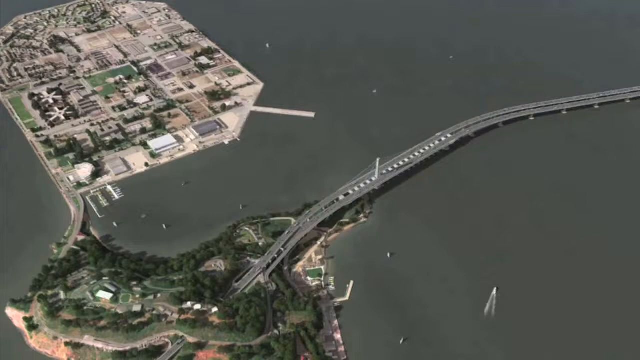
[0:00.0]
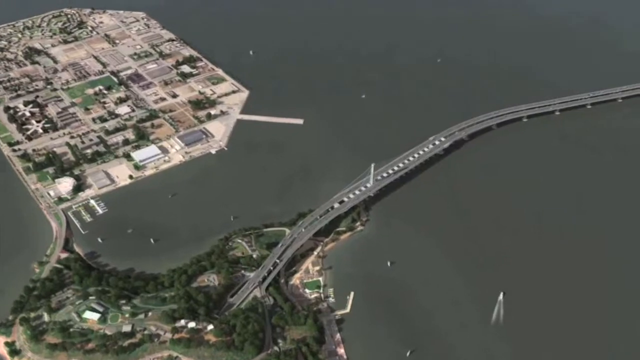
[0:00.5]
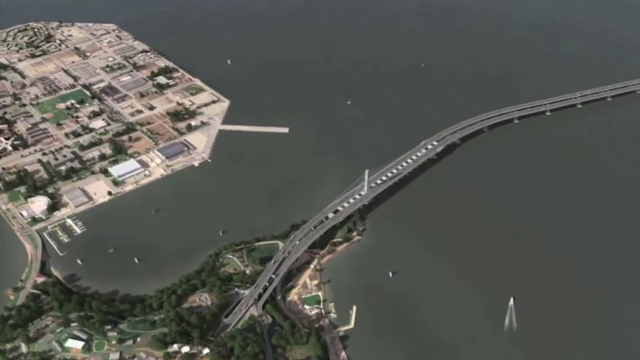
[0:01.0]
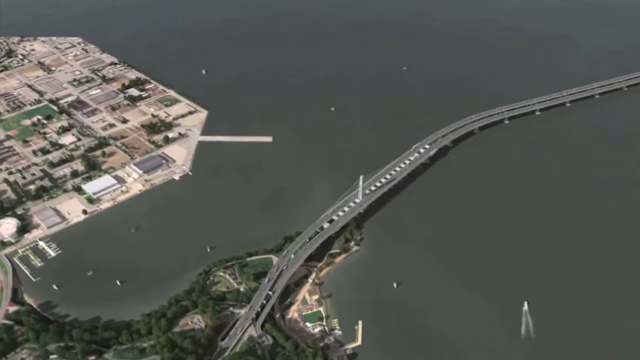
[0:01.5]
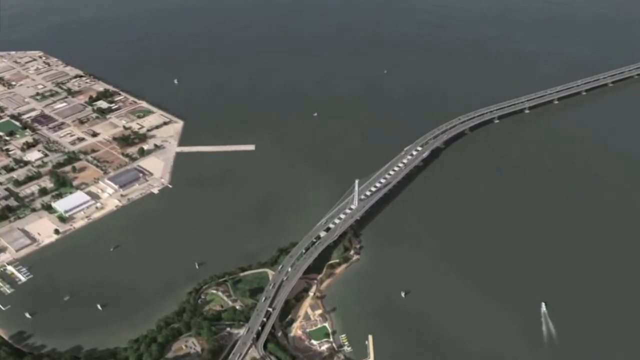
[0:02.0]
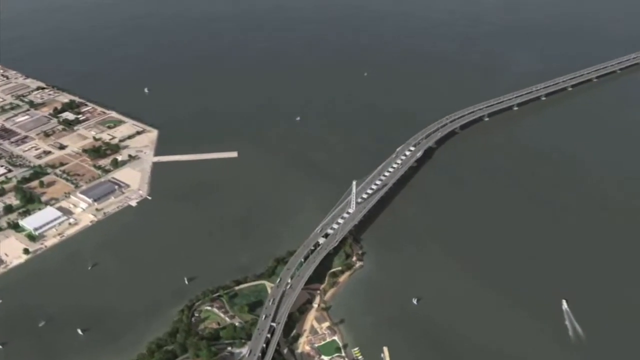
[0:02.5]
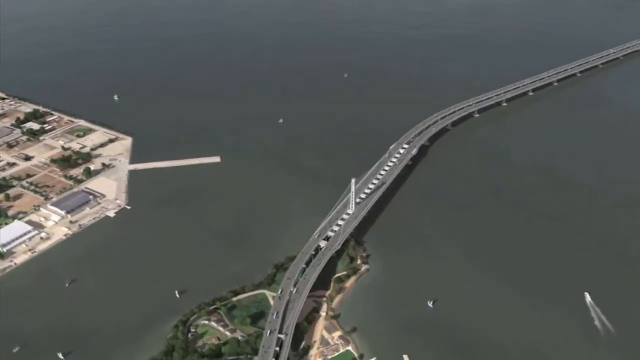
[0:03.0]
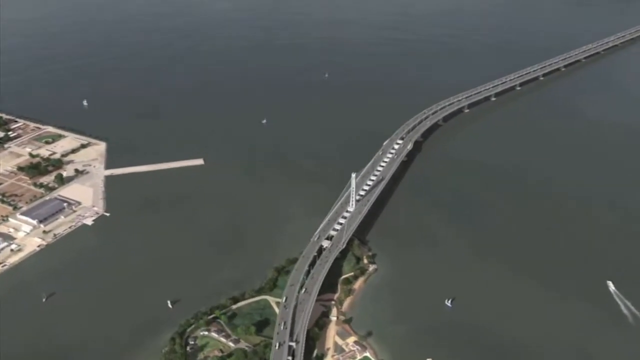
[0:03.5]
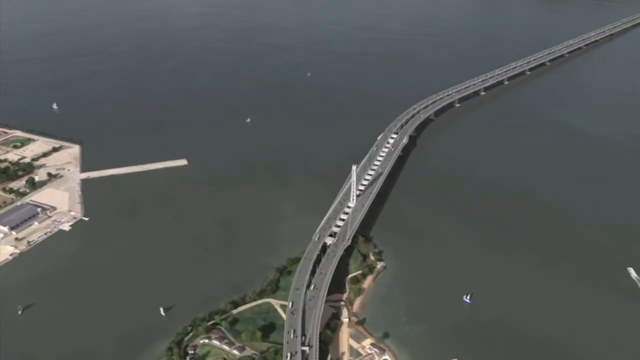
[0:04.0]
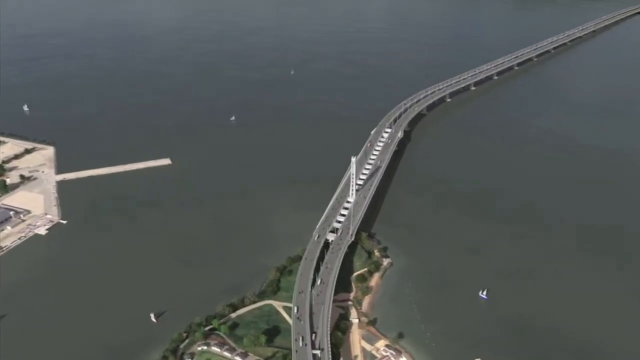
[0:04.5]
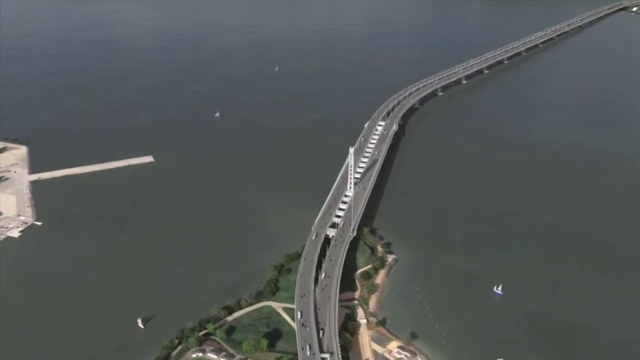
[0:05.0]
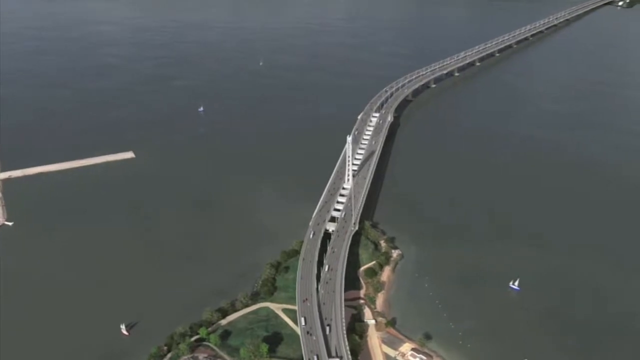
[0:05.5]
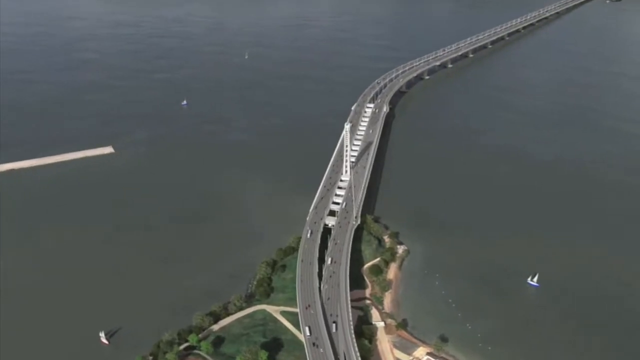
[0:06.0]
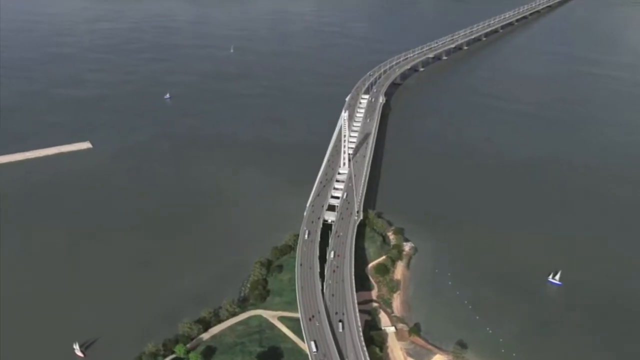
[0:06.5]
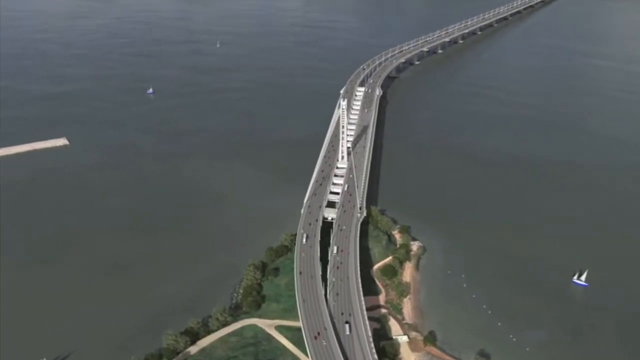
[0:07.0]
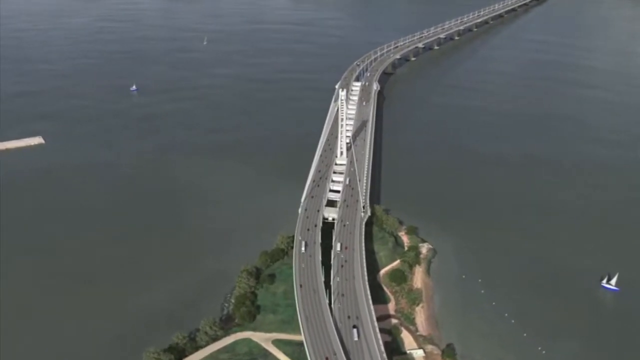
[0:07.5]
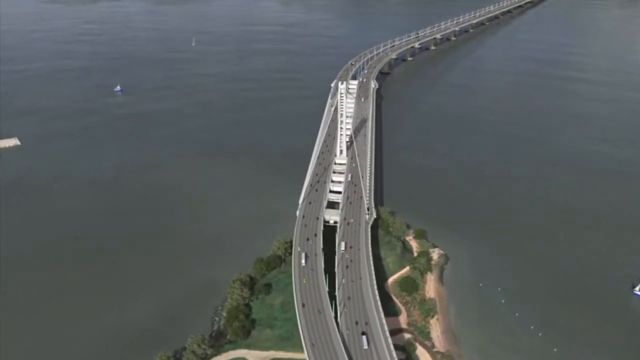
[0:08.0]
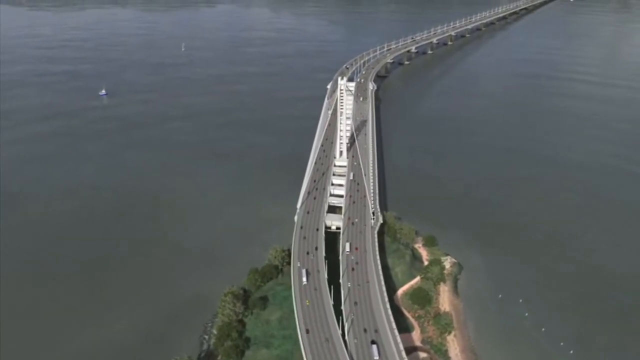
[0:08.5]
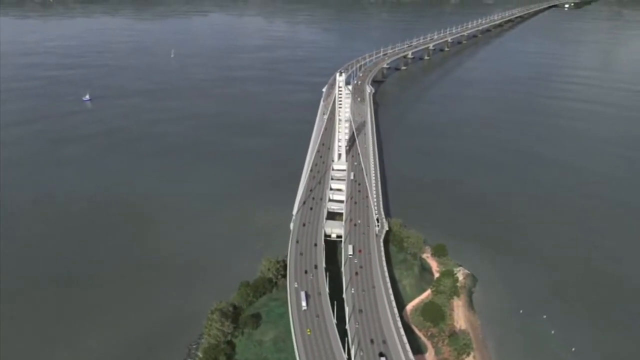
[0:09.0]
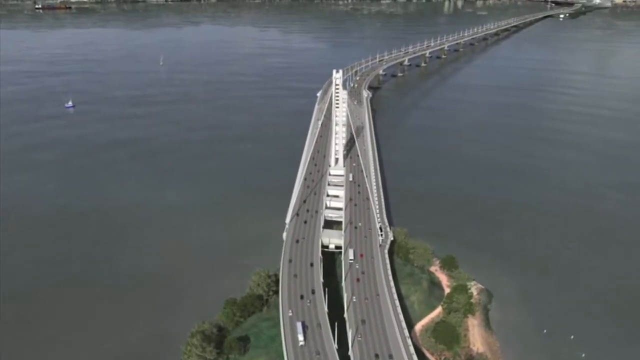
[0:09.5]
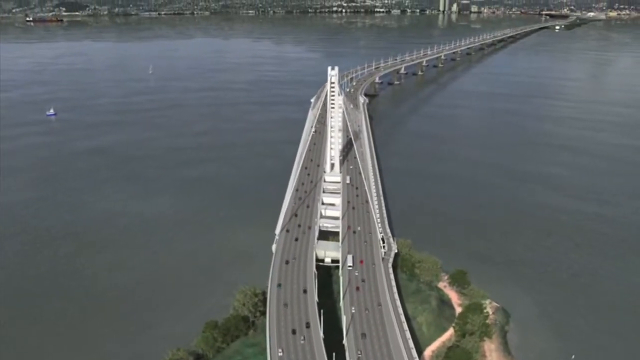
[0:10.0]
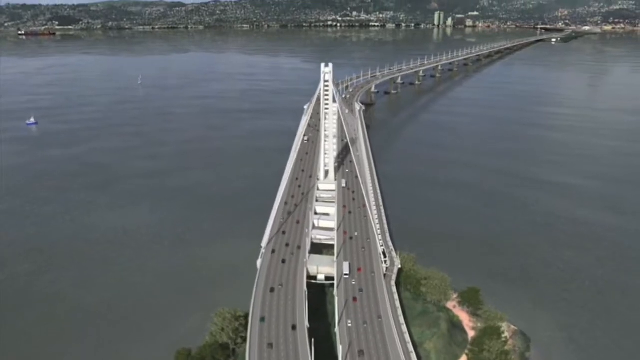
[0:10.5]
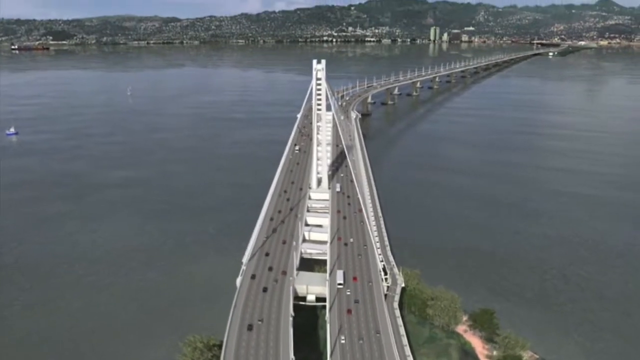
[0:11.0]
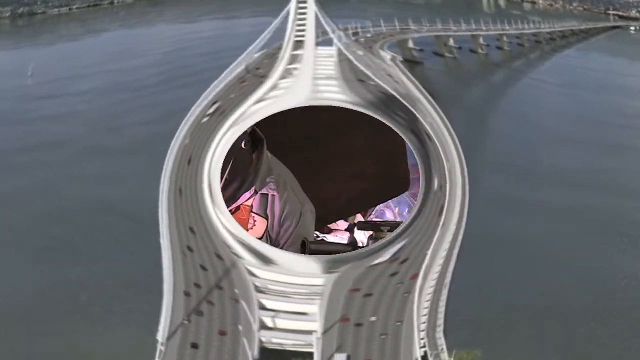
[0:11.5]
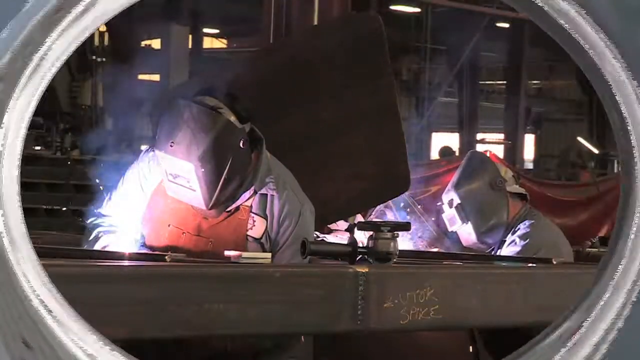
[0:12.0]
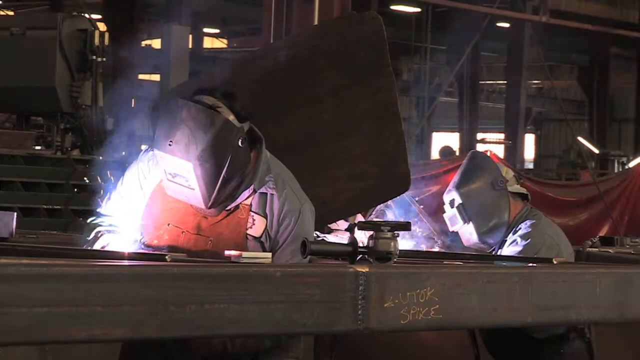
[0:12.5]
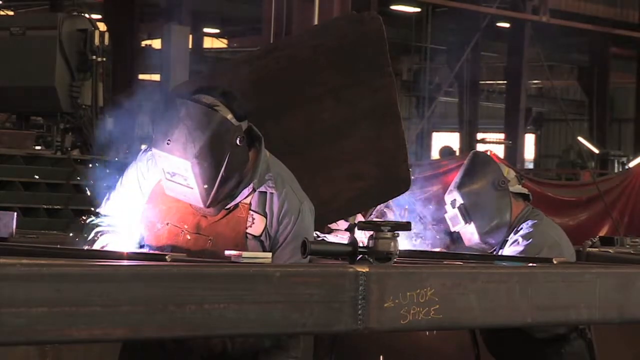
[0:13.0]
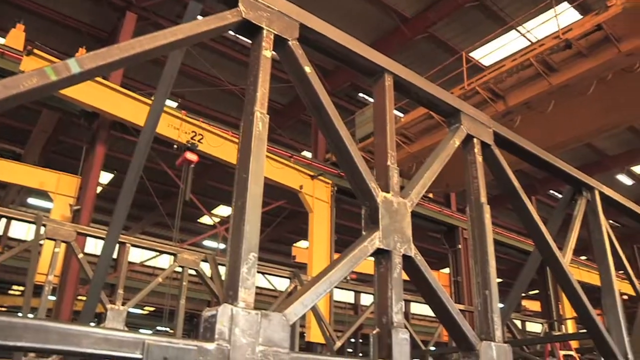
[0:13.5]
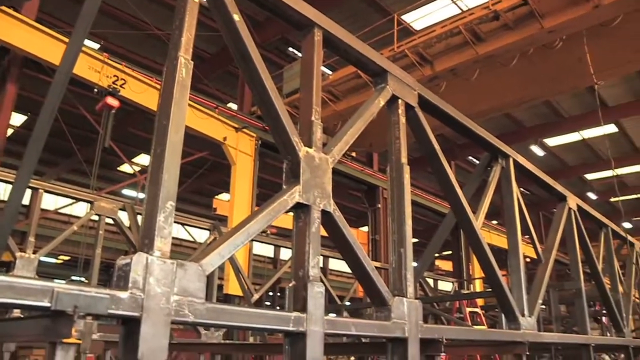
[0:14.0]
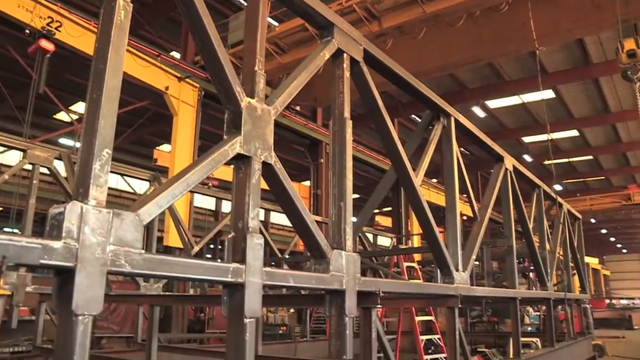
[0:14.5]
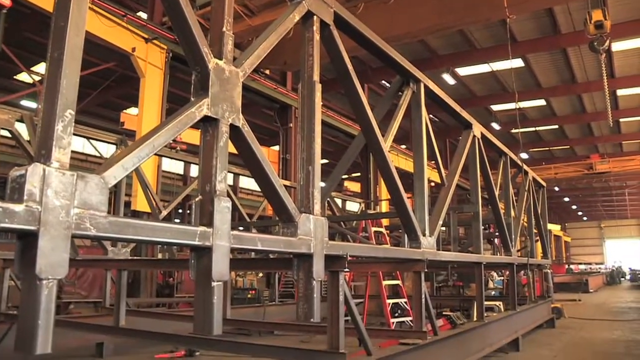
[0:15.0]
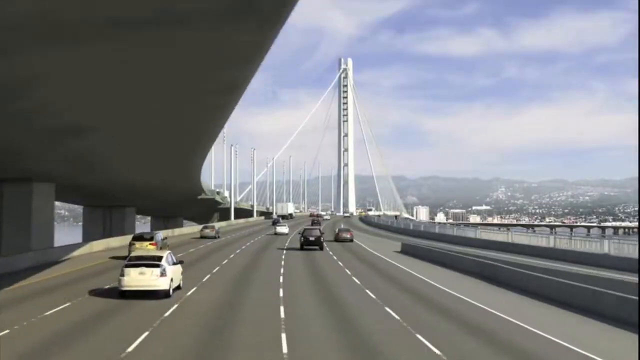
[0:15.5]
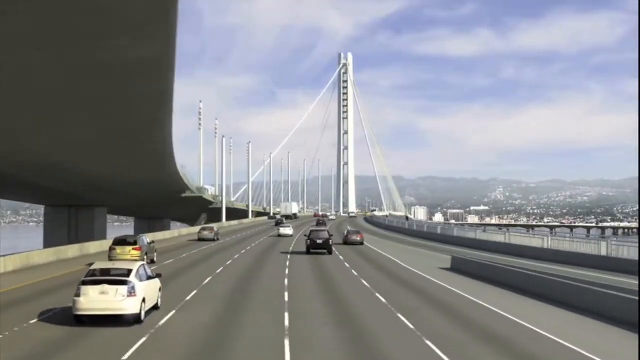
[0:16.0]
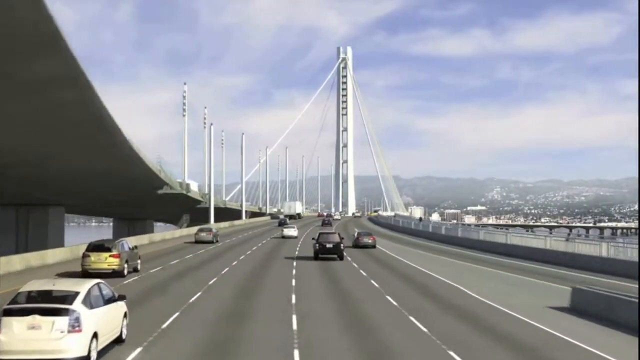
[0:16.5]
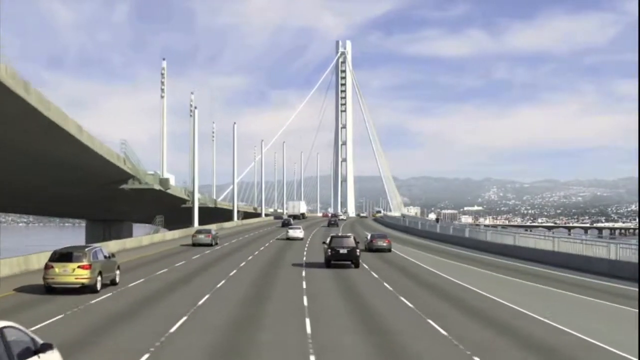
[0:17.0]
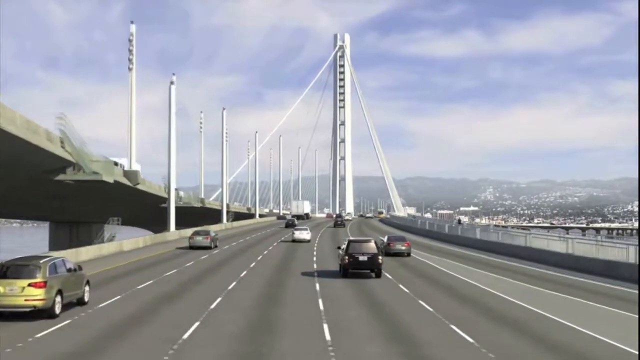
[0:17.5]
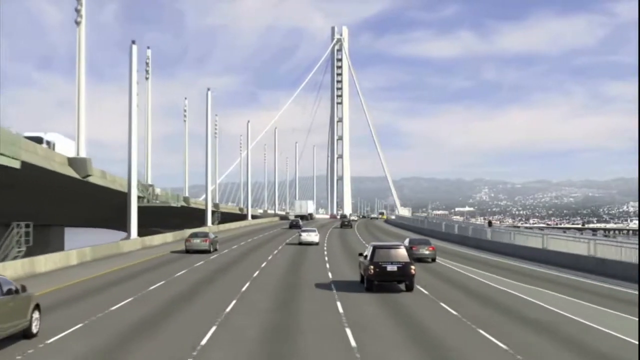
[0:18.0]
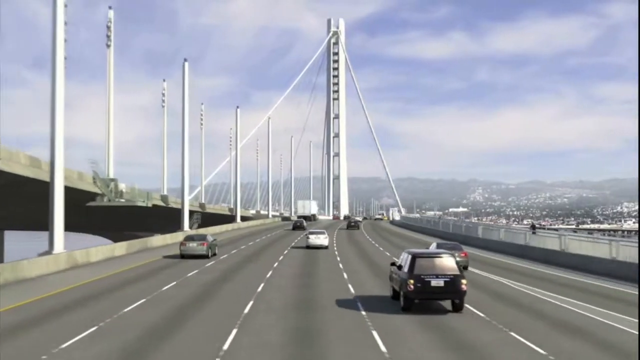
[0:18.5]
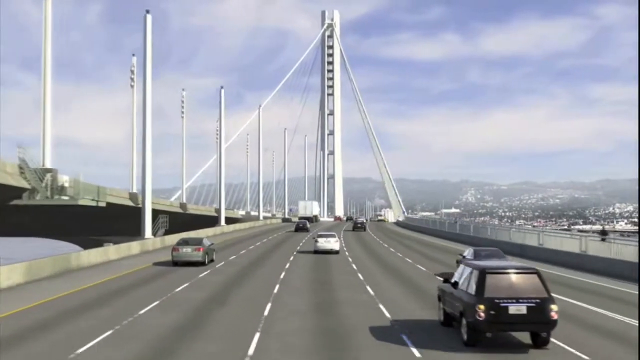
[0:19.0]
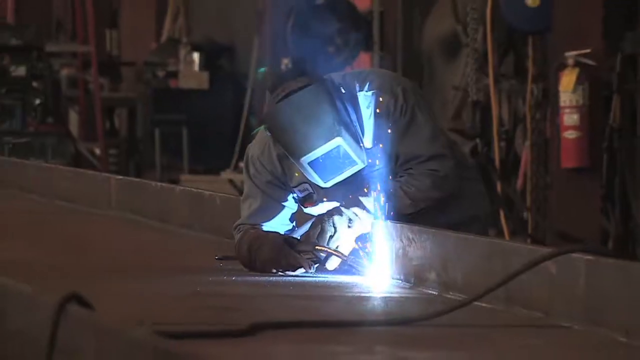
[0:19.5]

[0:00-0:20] A body of water is seen from above as the camera pans closer to it. Off to the left is a body of land surrounded by the water, and the camera narrows in on a bridge. A bubble transition changes the scene to people who look like they are welding inside a factory, then the view quickly returns to the bridge, with cars moving quickly along the road. Next, someone is welding inside a building, wearing the traditional head covering expected when working with welding materials. Sparks are briefly visible as the person works on a long rectangular table. There are cords on the table and lots of items in the background, including a fire extinguisher behind the man who is welding.